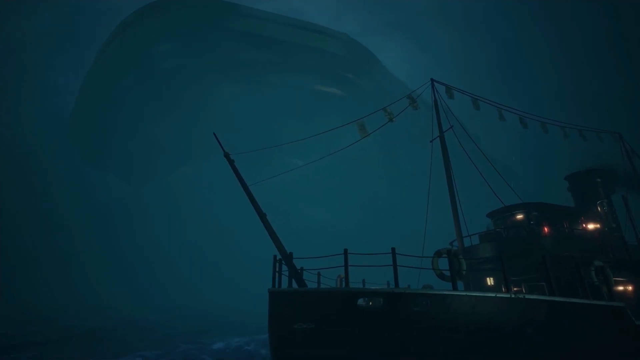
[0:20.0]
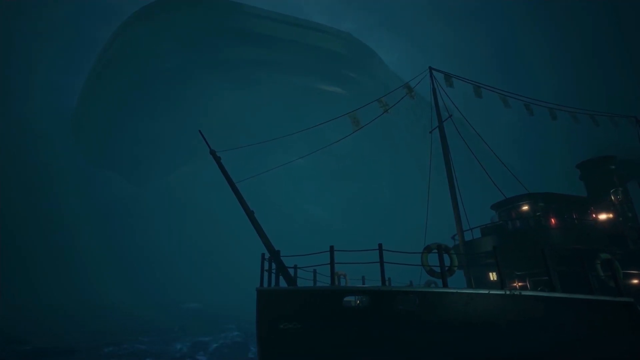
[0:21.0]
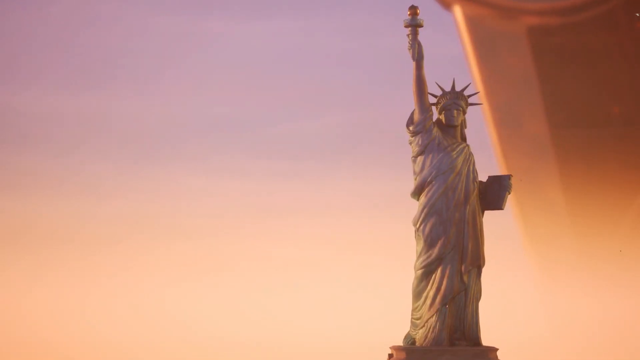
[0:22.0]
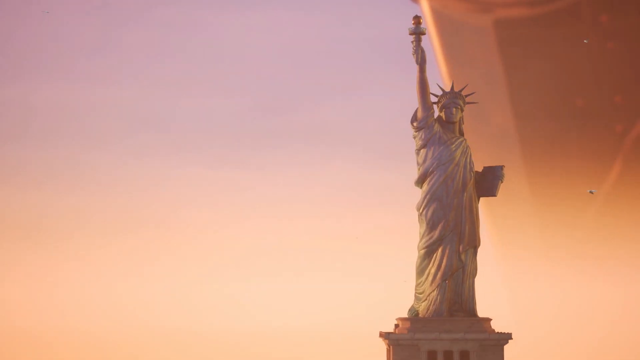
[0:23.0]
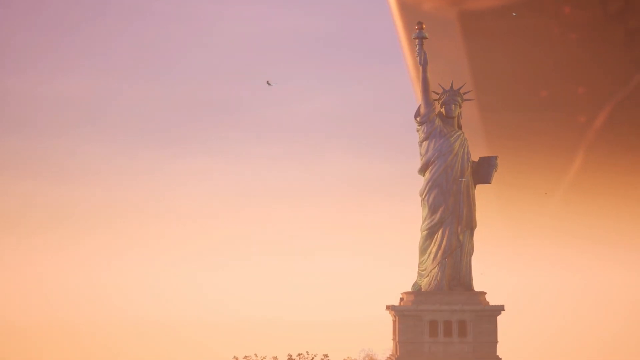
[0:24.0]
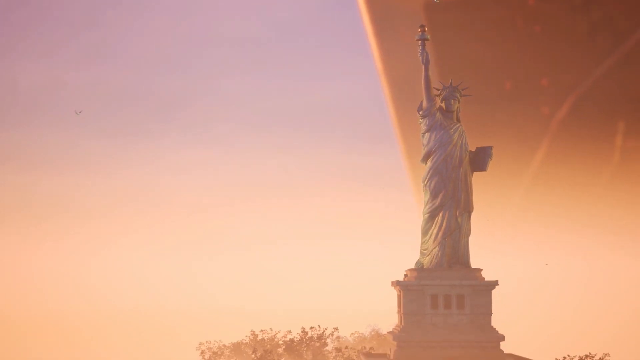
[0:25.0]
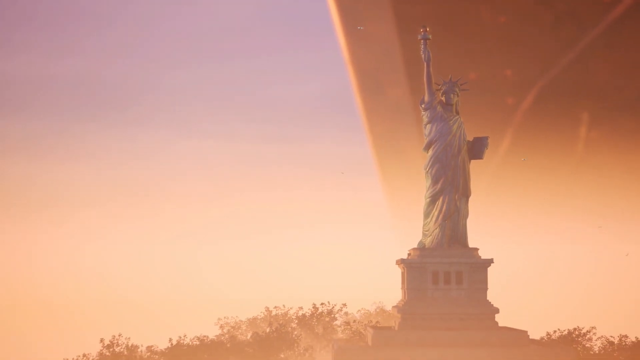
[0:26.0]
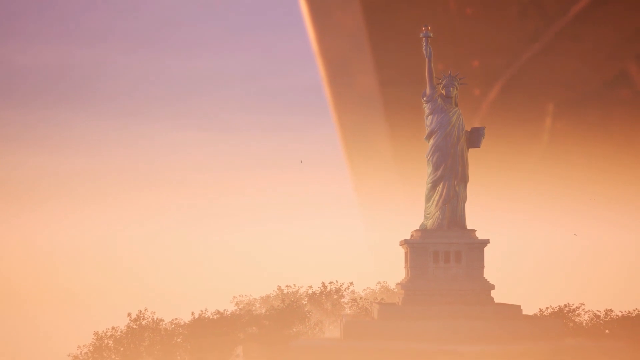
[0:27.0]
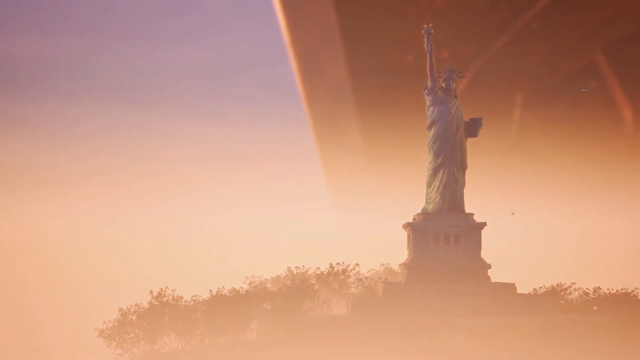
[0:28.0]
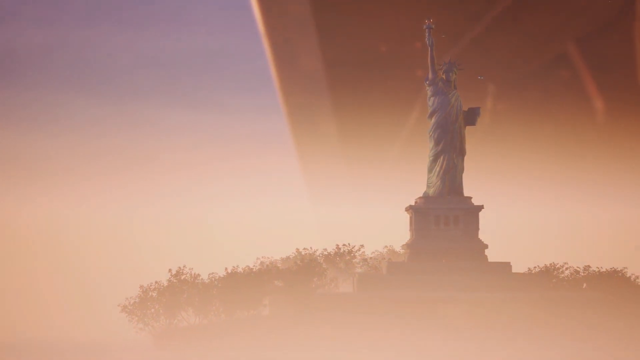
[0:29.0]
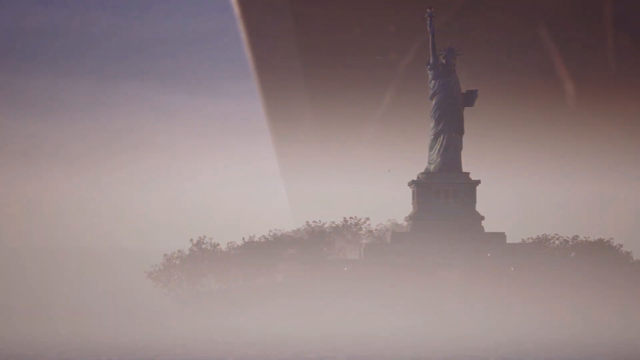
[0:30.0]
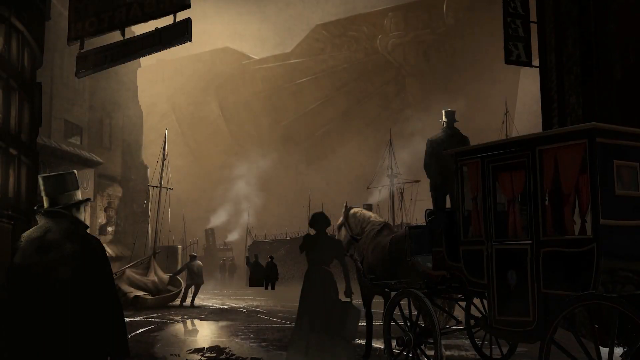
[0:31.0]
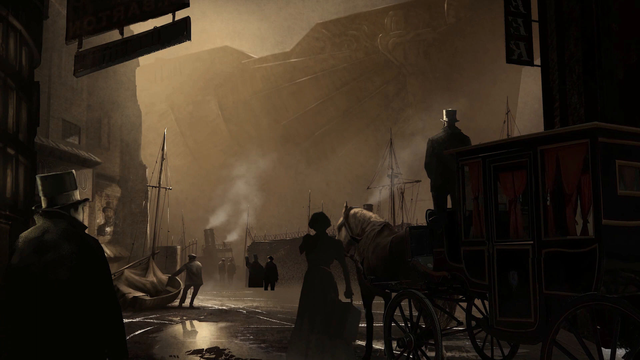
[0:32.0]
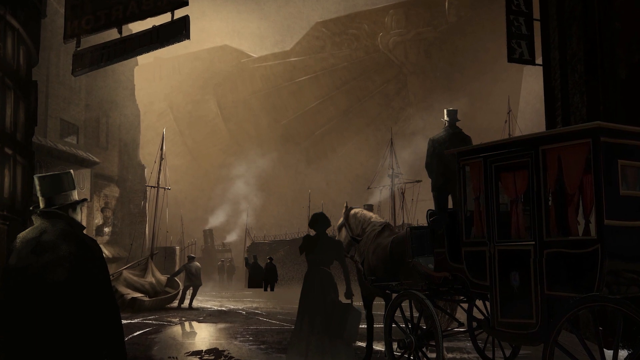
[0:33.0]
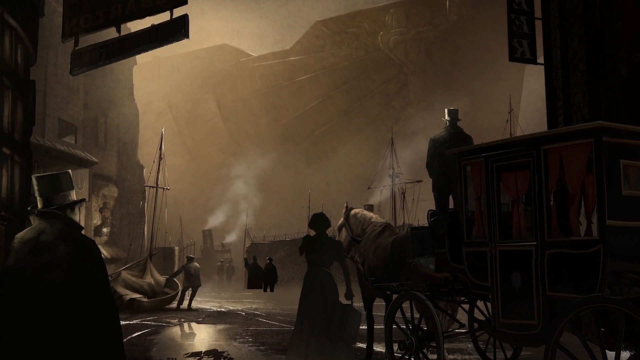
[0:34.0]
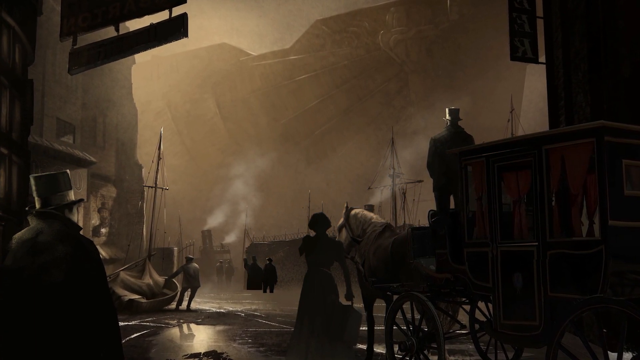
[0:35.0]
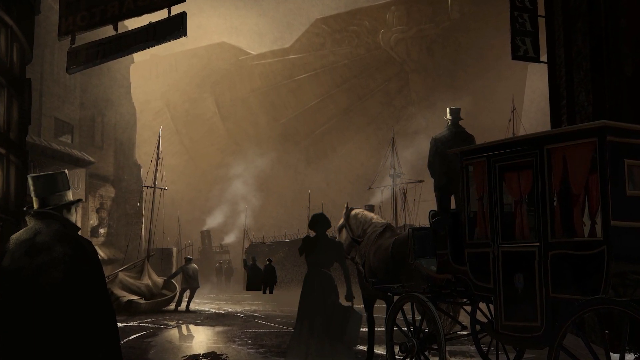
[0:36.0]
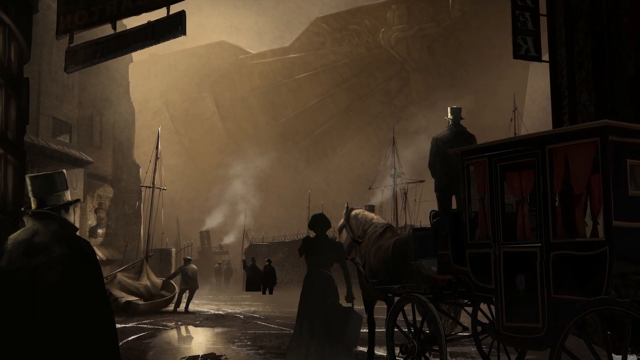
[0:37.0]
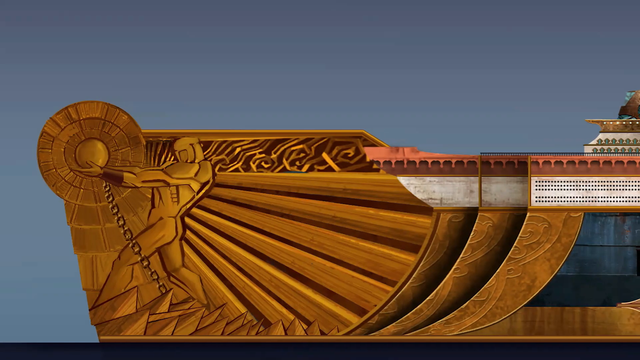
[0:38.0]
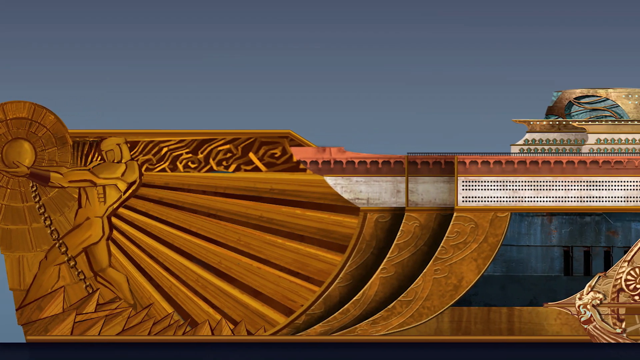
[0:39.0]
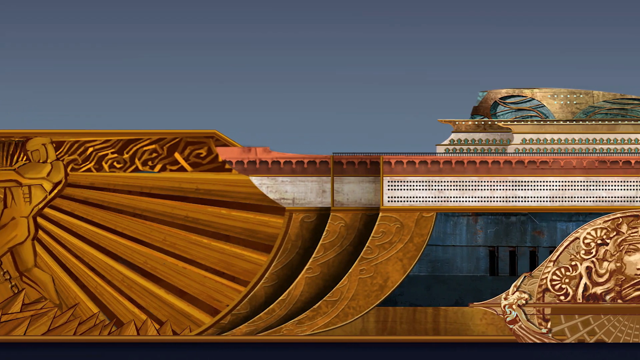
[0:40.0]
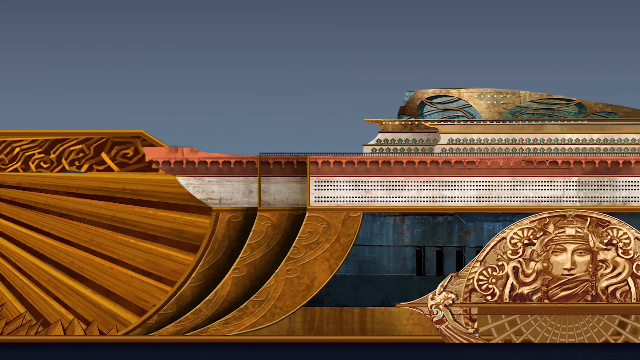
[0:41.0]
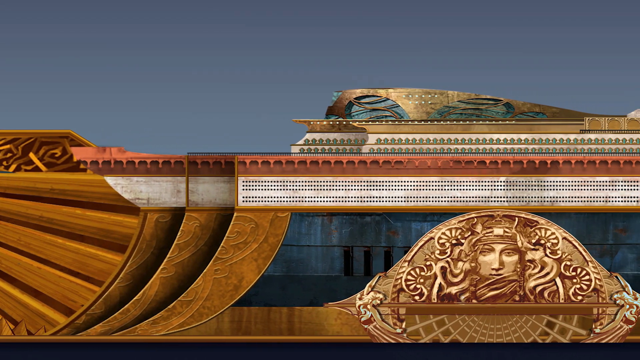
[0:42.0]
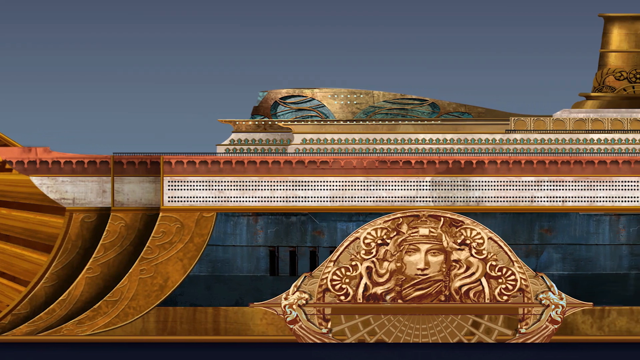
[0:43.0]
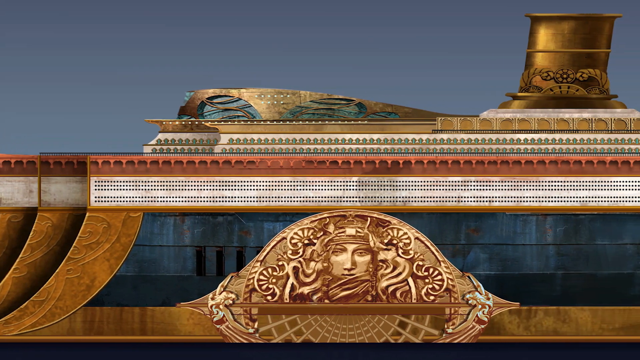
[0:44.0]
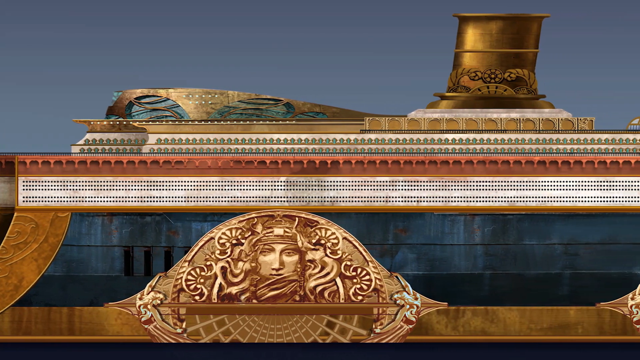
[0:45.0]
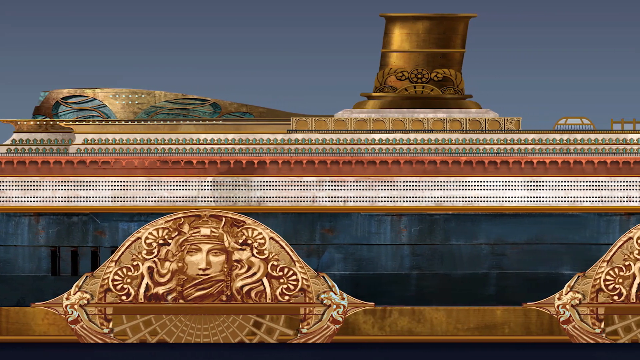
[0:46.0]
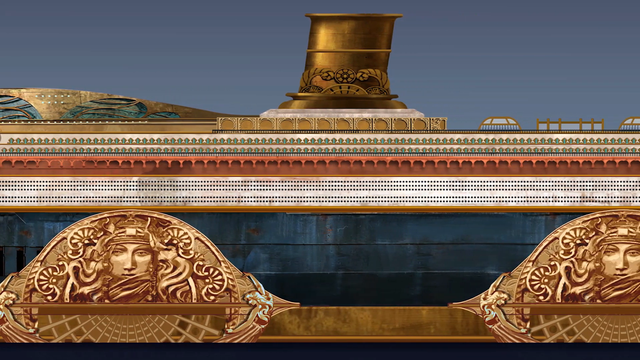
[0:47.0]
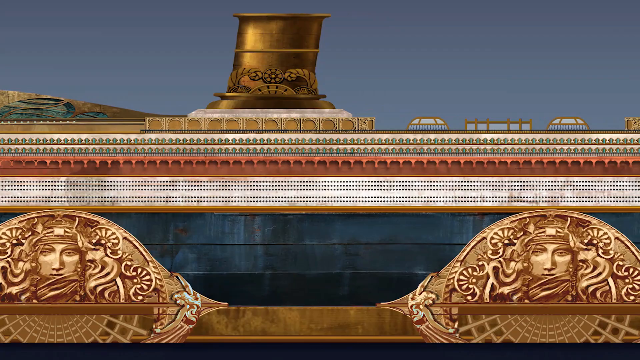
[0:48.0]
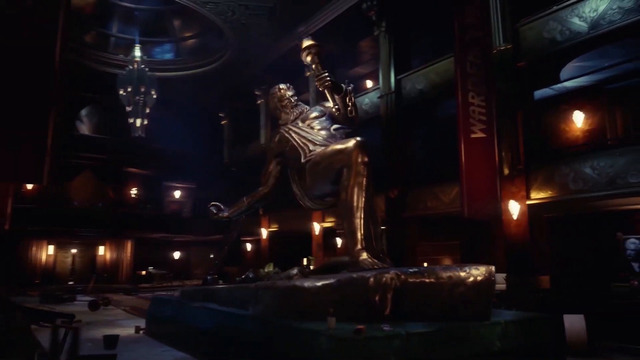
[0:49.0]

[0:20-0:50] The view is of the cruise ship, and in the background there appears to be some type of really large object about three times the size of the cruise ship, though it is hard to see exactly what it is. The scene switches to the Statue of Liberty; it is now bright outside but with a kind of purplish haze. Behind the statue is an object that almost looks like maybe another boat, kind of moving in at a really slow pace. Birds fly around in the background. The top of the Statue of Liberty has a gold, amber object, and what looks to be a hull goes past it.